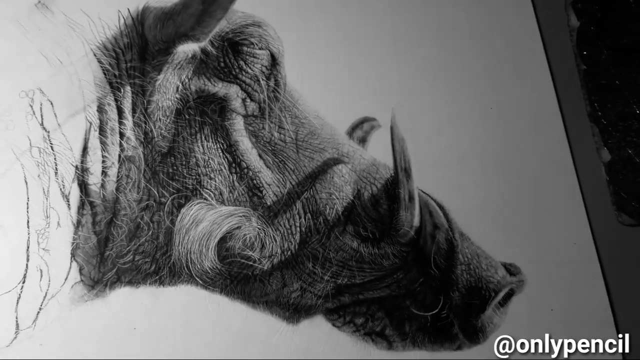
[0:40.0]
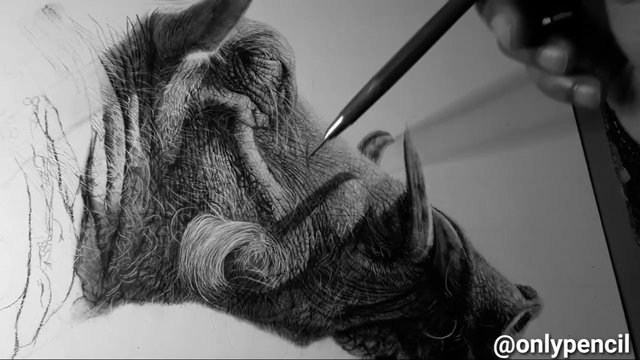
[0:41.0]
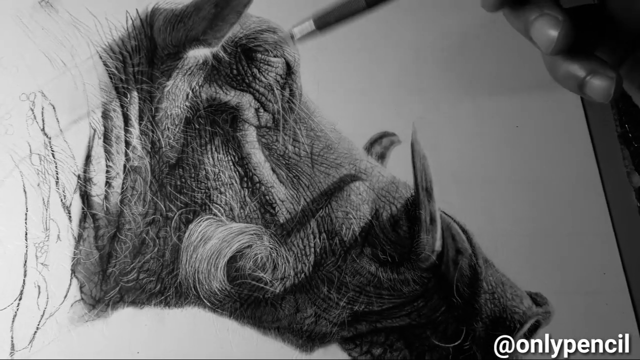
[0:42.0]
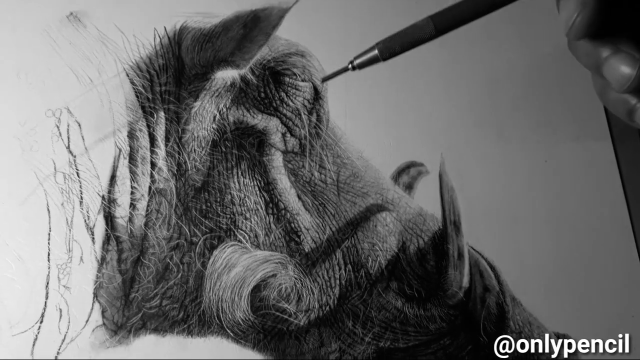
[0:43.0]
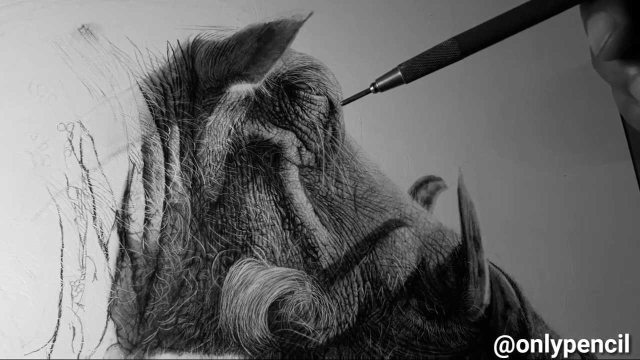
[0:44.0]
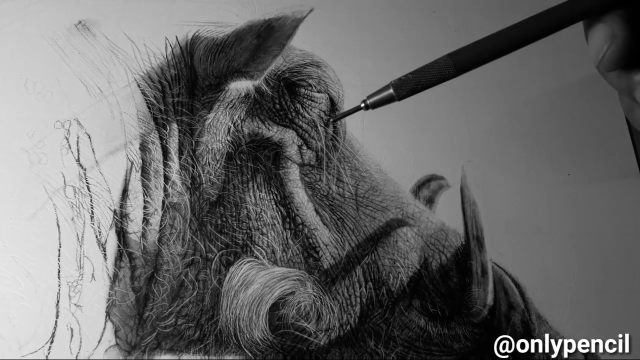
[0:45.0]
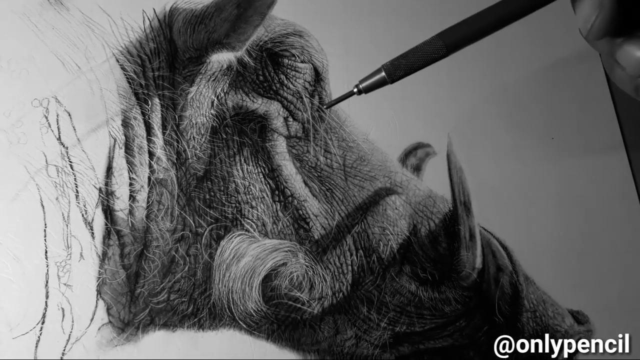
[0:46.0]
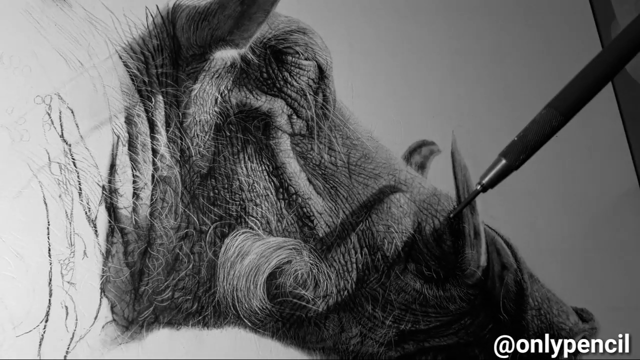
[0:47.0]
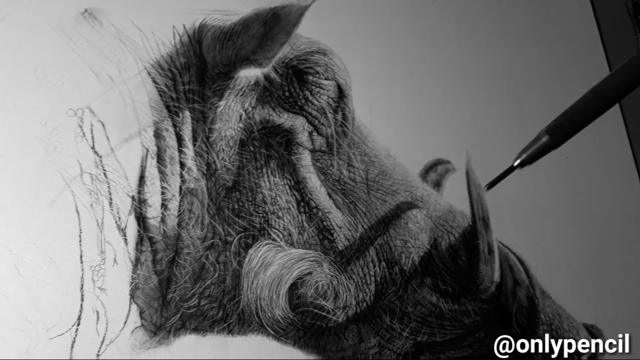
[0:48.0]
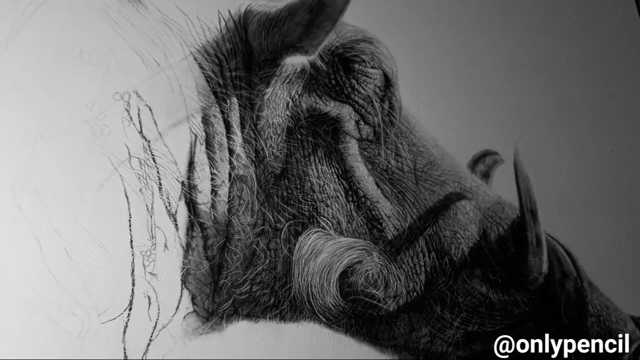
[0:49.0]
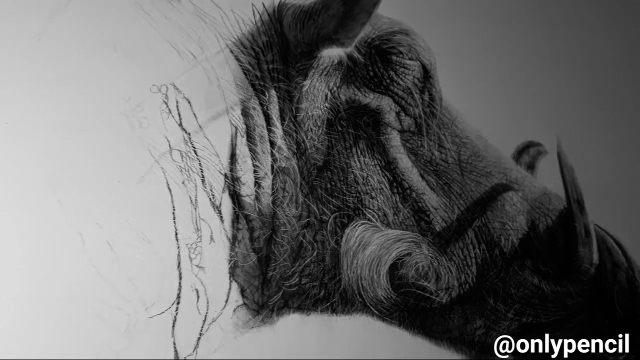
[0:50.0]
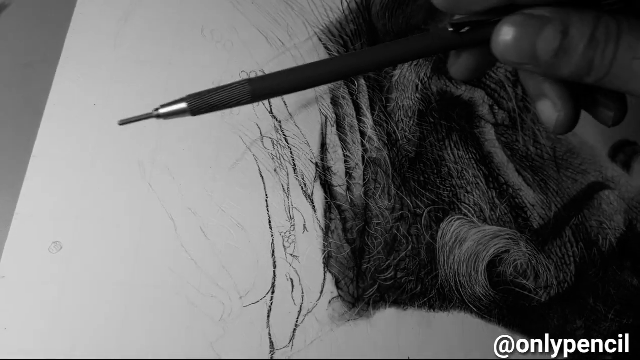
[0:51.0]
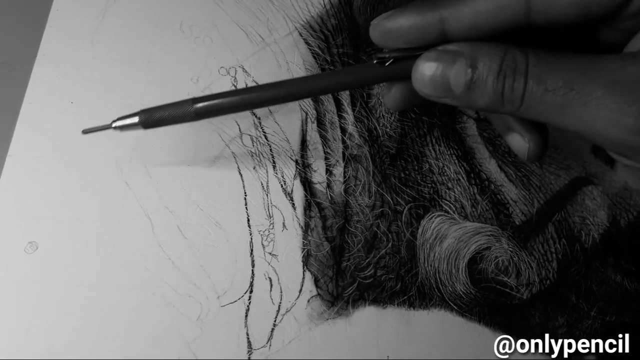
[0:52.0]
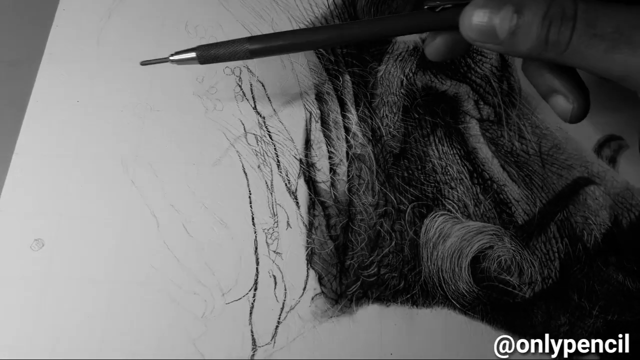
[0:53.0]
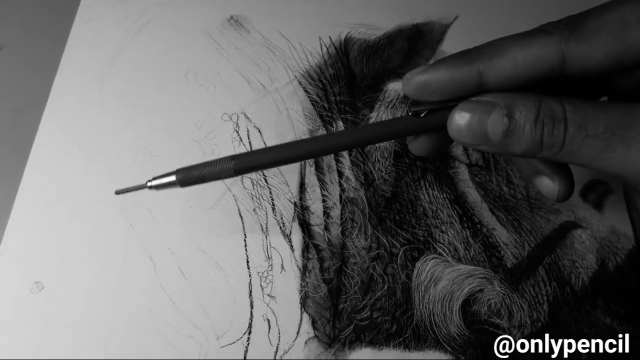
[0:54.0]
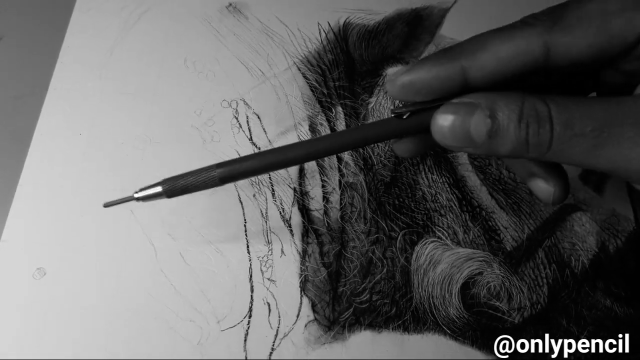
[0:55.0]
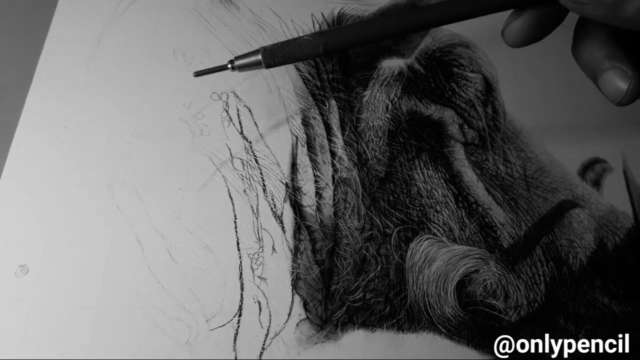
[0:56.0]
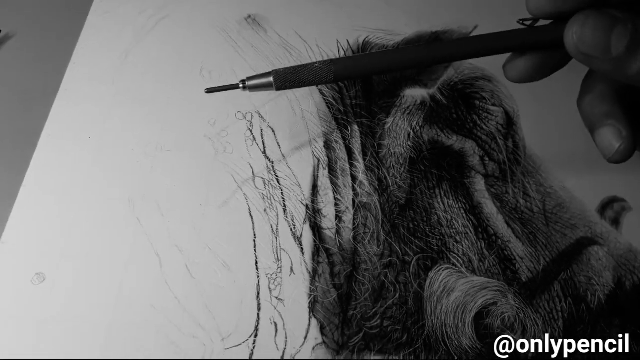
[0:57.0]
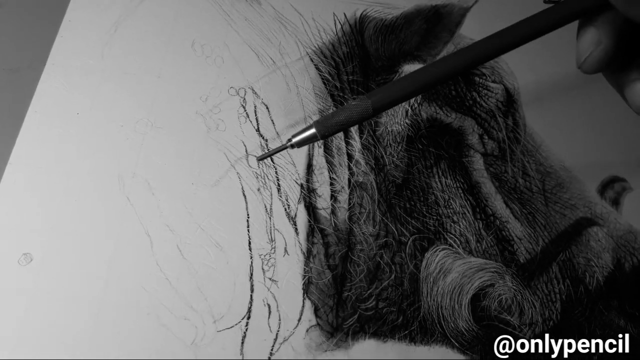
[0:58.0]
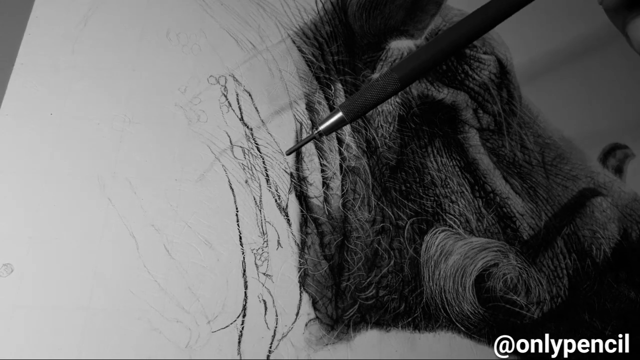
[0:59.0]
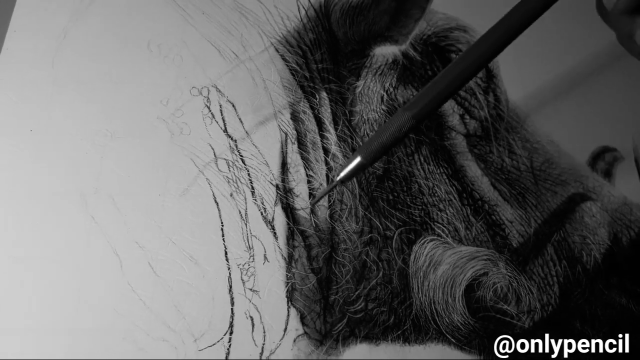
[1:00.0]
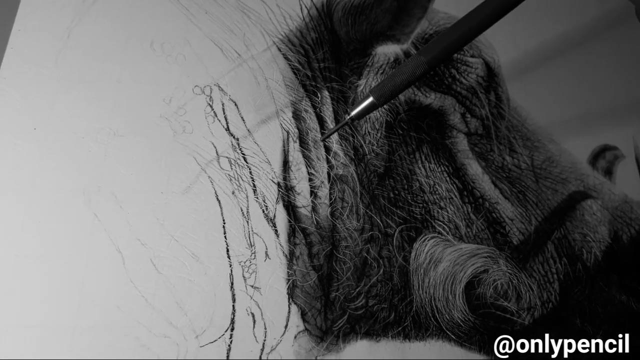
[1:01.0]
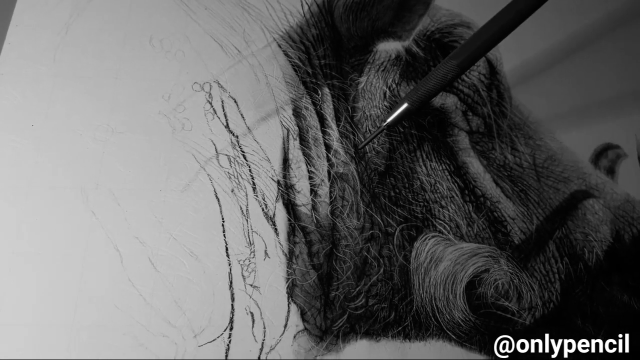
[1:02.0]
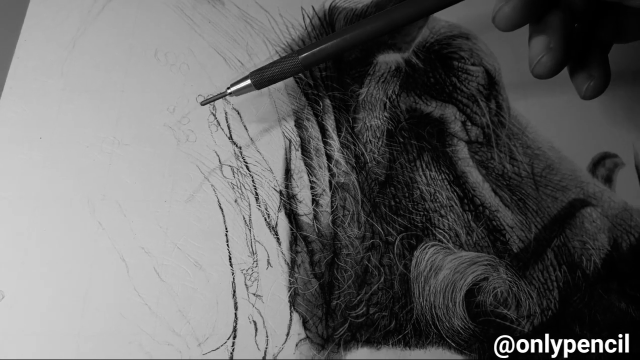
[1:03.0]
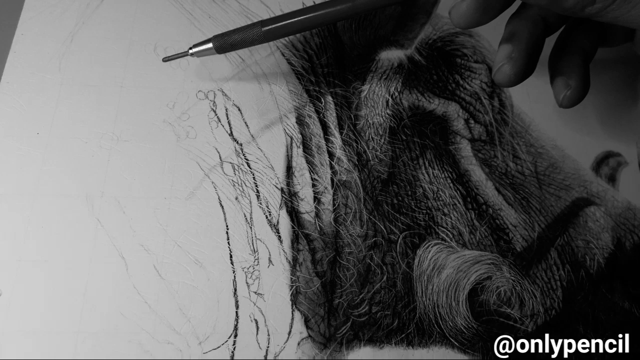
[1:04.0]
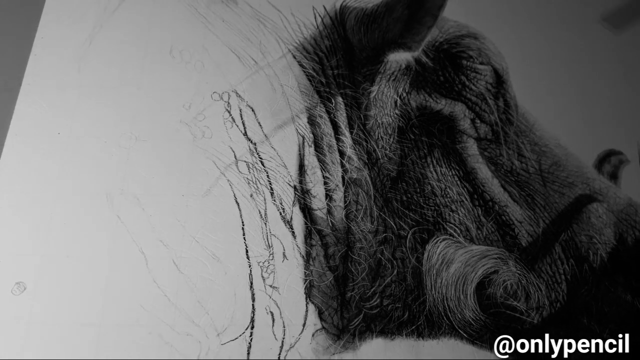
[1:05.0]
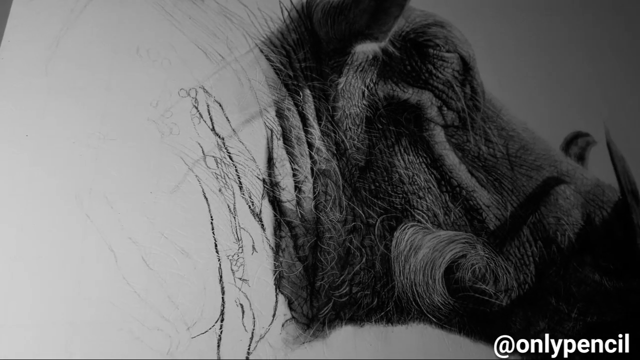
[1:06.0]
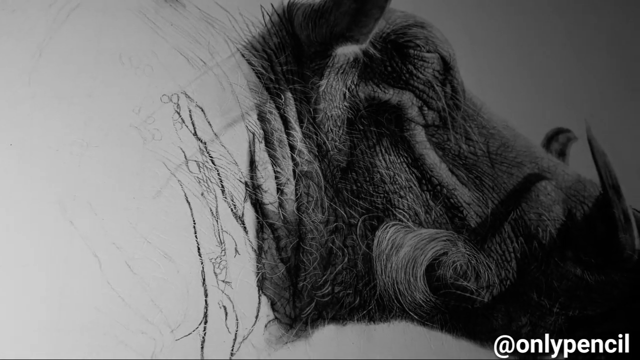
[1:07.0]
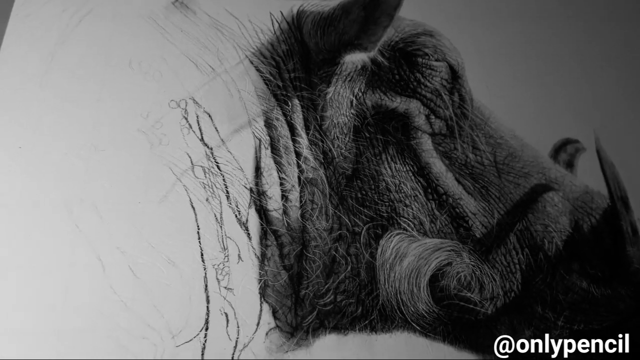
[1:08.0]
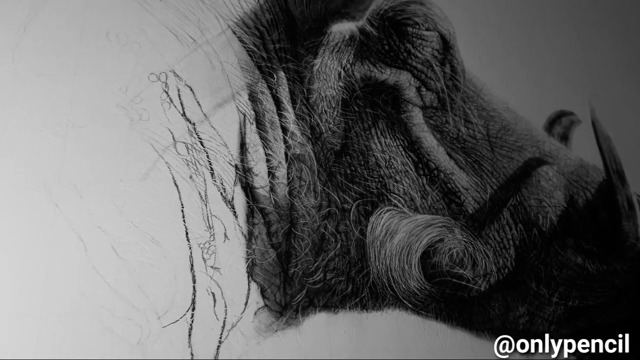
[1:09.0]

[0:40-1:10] The pencil comes in about two inches from the top right corner, angling down to the left just above the ridge line and below the eye. Part of the palm of the hand is visible, along with the middle, ring and pinky fingers, a bit of the thumbnail, and some skin behind it curling down, not quite touching the palm. The hand moves almost off the right side as the pencil goes up to the nose, then down to where the horns are, and back off the right side. The camera shakes badly and pans to the left again, far enough that the horns on the side of the nose are out of view. The hand comes in again, showing the side of the pointer finger on top of the pencil, the thumb down its side, and another finger coming out from under the thumb; the whole back of the thumb and the thumbnail are visible. The pencil reaches almost all the way to the left side of the page, where there is nothing drawn, and the hand makes a small circle, revealing a bit of the other fingers underneath. The pen goes back to where it first started, then moves up closer to the base of the neck, pointing down at it. The hand goes off screen, comes back, and goes off again, leaving the shot focused on the picture.